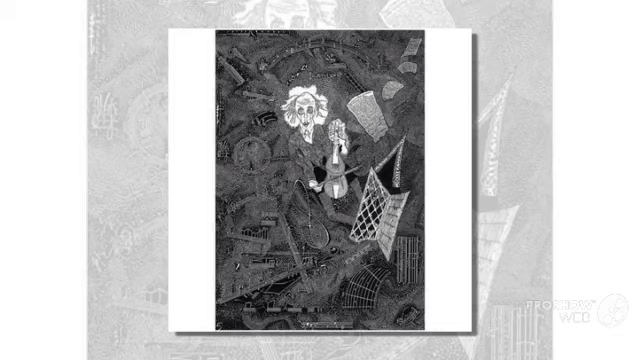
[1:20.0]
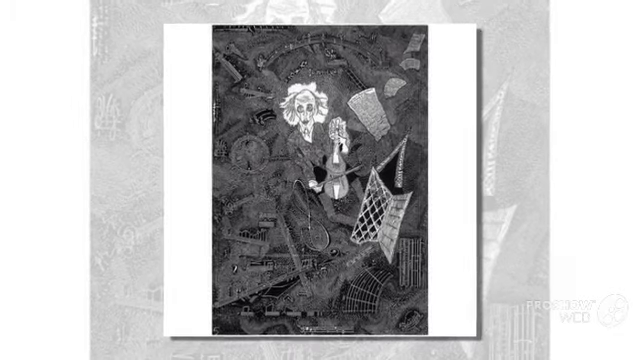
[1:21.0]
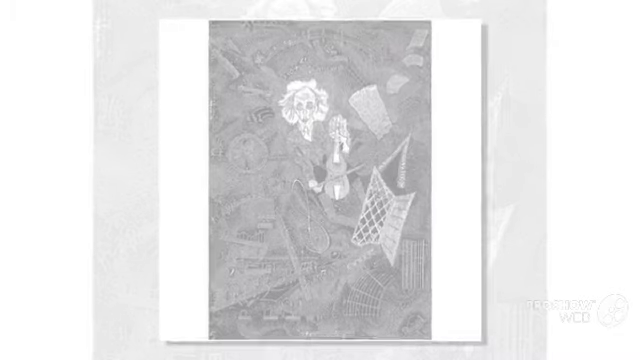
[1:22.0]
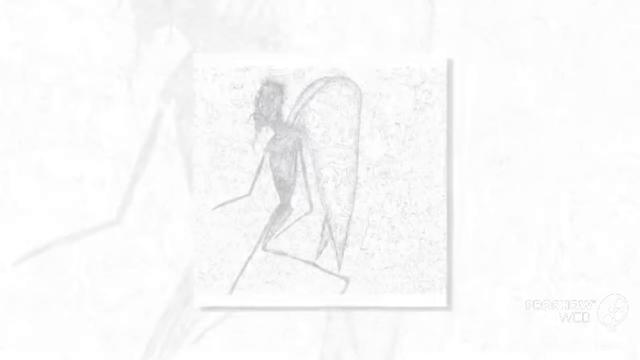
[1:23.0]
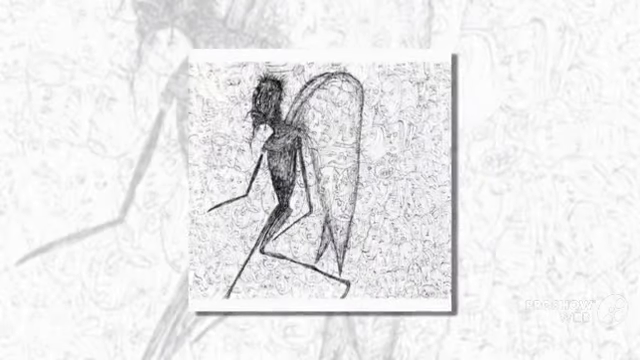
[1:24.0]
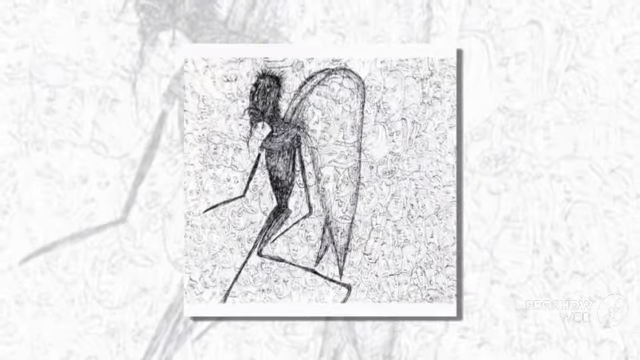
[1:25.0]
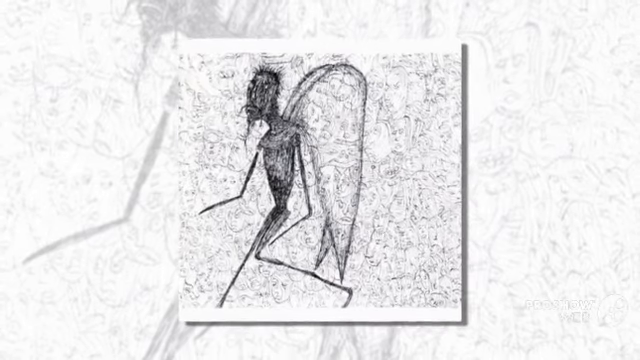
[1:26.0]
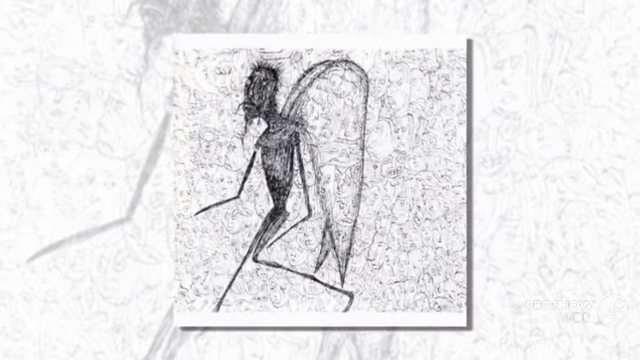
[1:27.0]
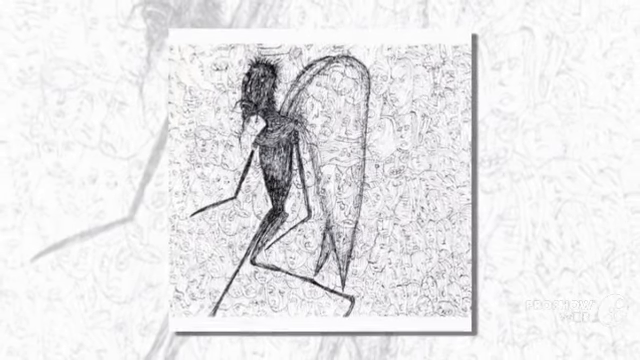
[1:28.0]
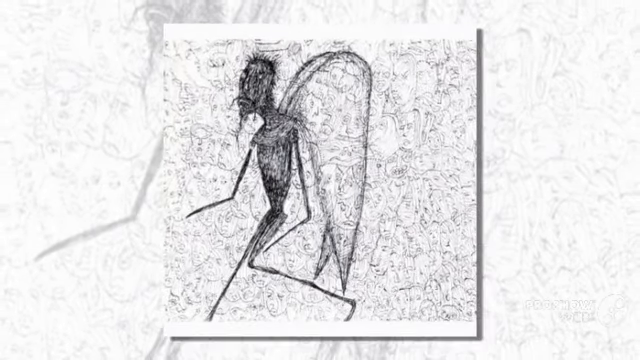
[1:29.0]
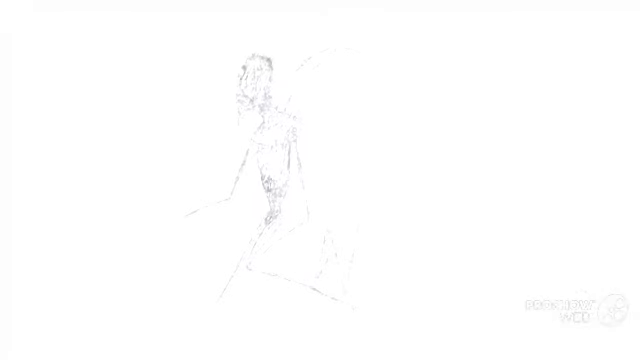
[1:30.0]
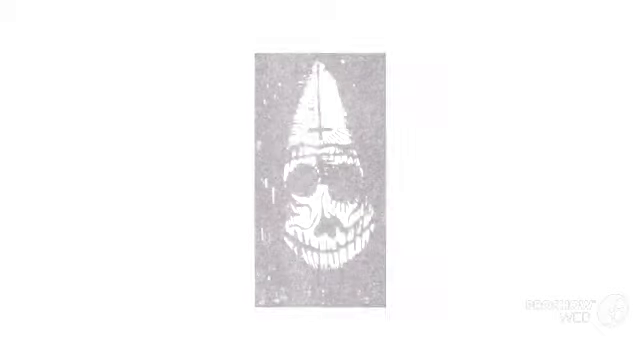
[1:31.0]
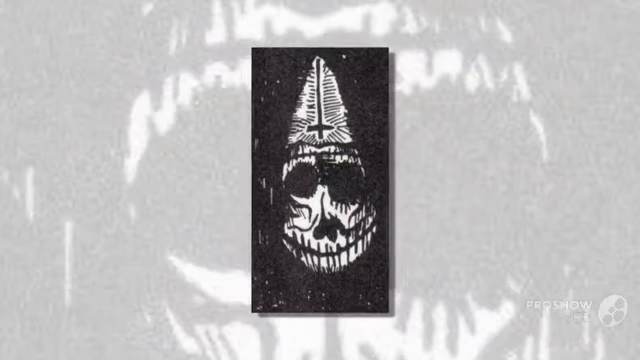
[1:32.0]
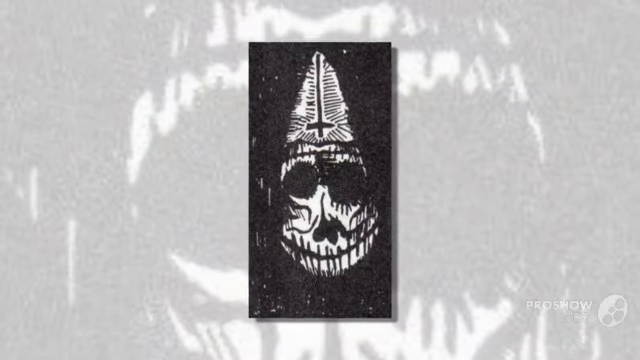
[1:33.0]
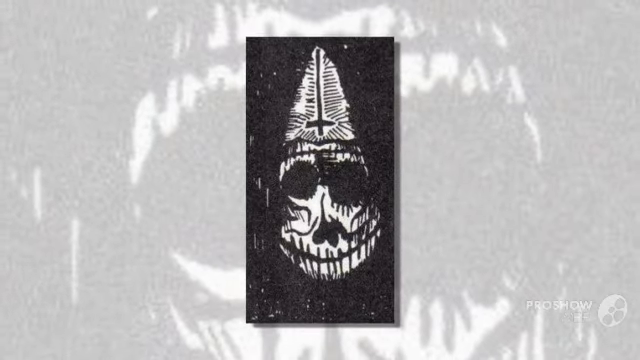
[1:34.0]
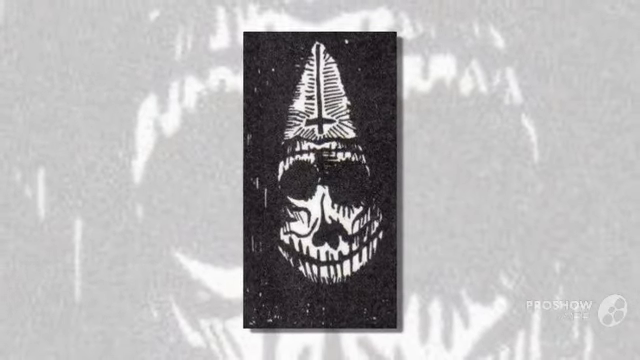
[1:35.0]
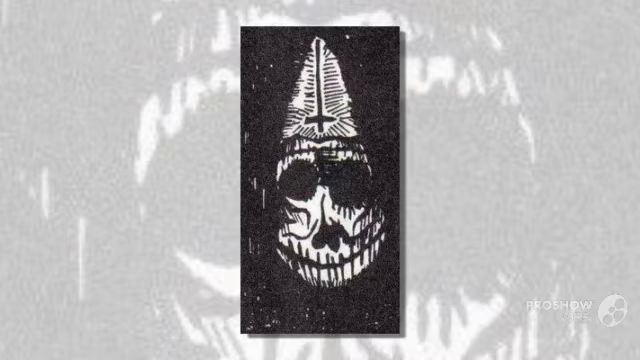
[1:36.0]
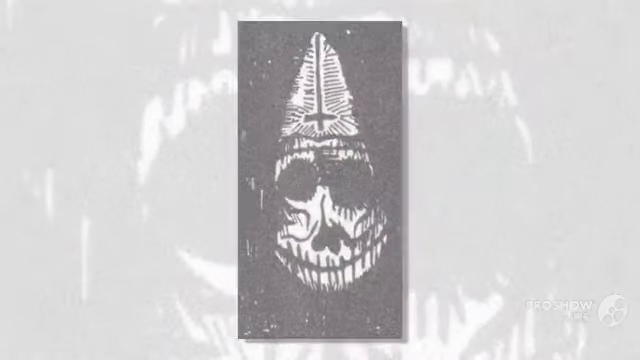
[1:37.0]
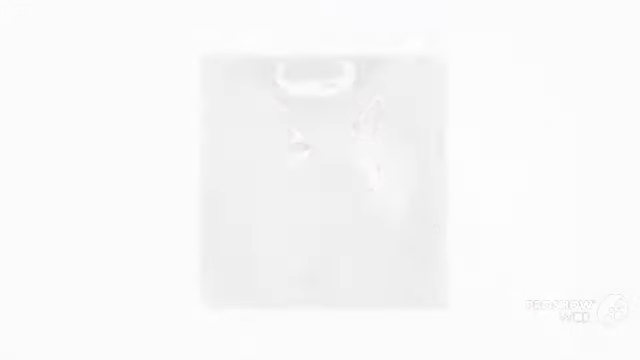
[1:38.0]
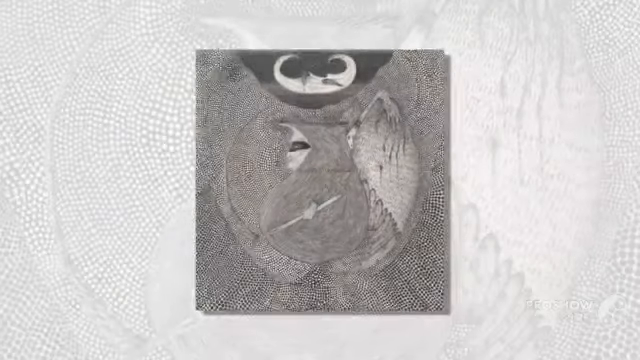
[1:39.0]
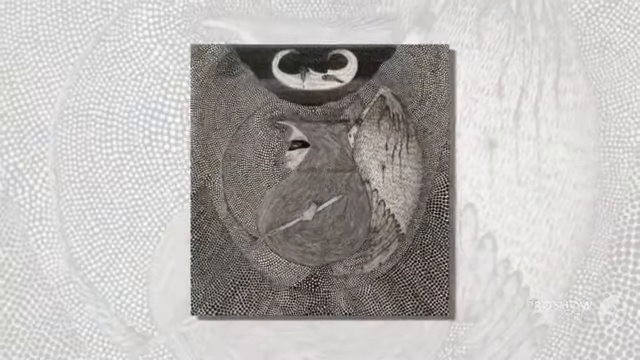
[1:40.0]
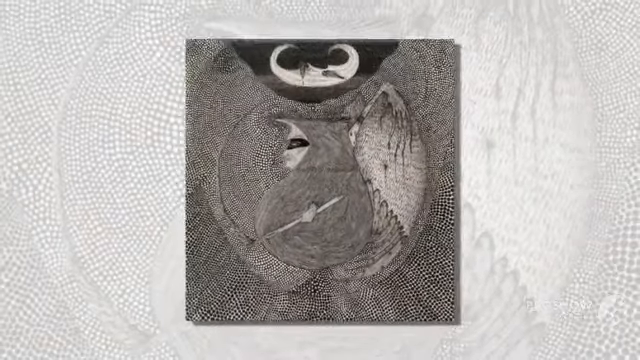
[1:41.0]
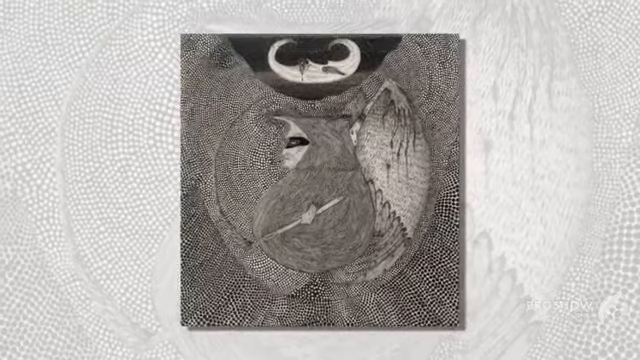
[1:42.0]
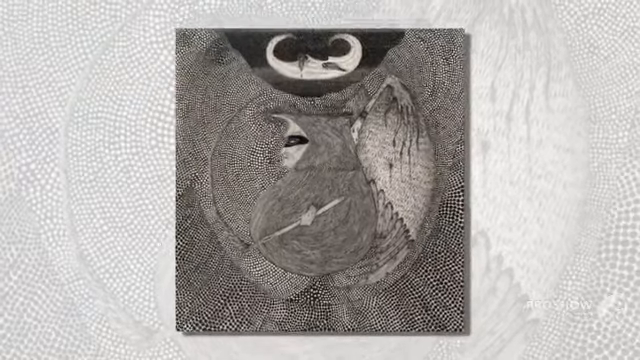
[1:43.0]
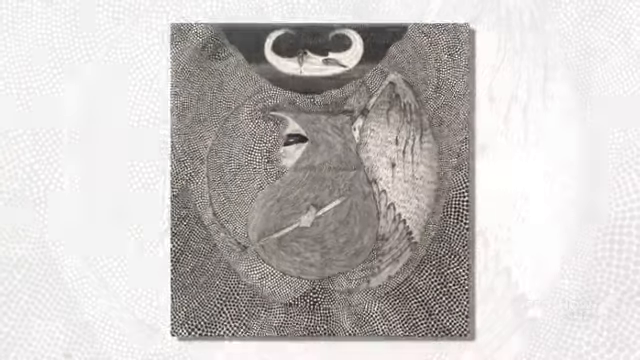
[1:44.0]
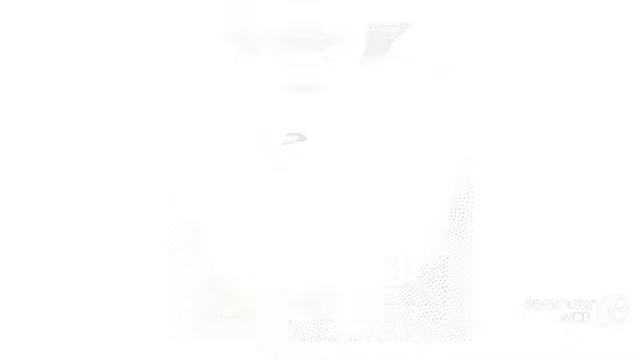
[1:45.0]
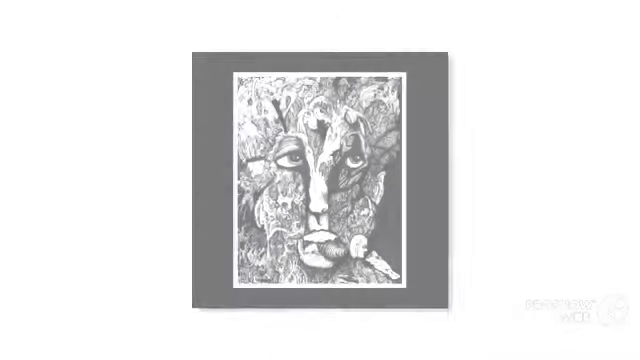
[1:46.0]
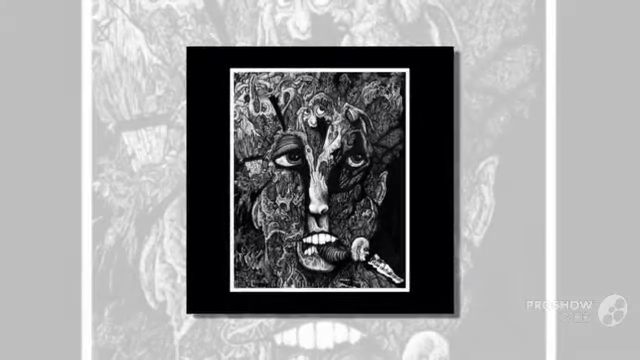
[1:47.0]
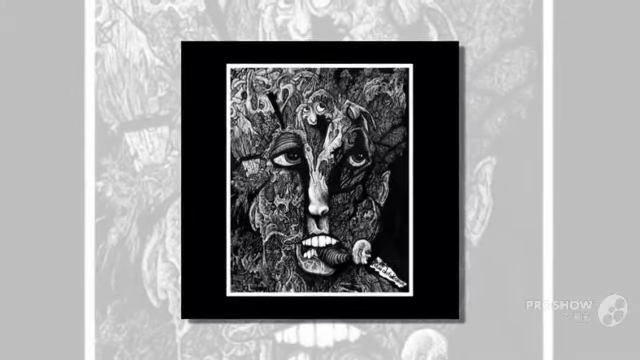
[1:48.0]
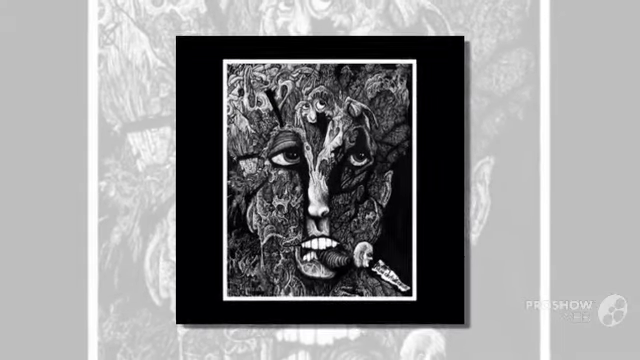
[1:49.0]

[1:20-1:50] The video transitions through a few more images, starting with one that looks like a white-skulled old man holding a violin and pointing at the viewer with his bow, as if to get the viewer to play music. Next is a picture of a sickly-looking black stick-figure man with a whiter torso and head. He has a bit of a goatee, fuzzy short hair and wings, which make him look sort of like a mosquito man, and he faces to the left. A white transition screen leads to another skull, which looks like it is wearing a pointy hat, perhaps a weird KKK reference. The hat has an upside-down cross on it, and the skull has two big black dots for eyes and stitches going through its mouth. Another change shows a big fat man holding a stick and looking to the left. He has something like a robber's mask covering his eye area and wings on his back, with what looks like a large bee comb full of little dots behind him. Above him is something like half of a moon face looking up towards the sky.